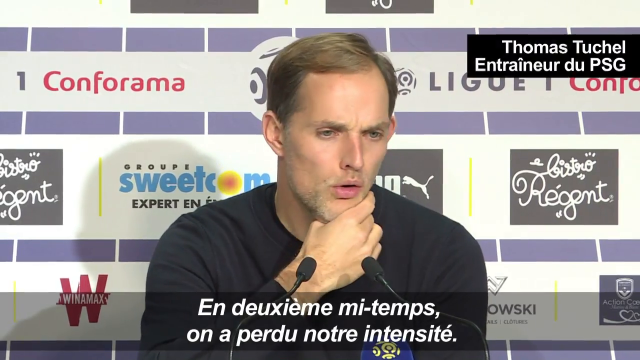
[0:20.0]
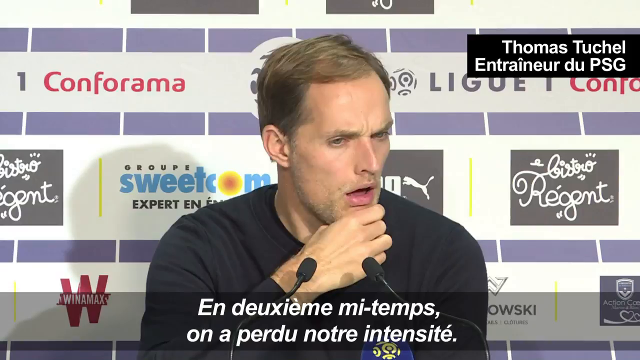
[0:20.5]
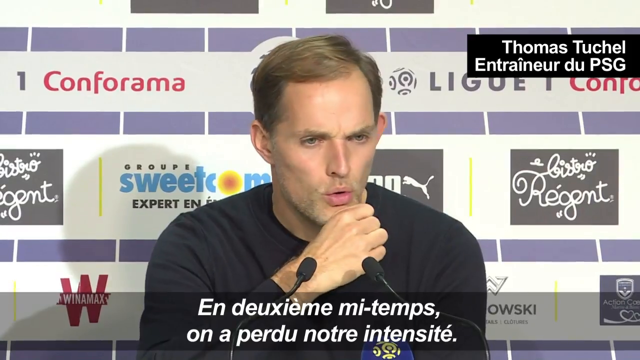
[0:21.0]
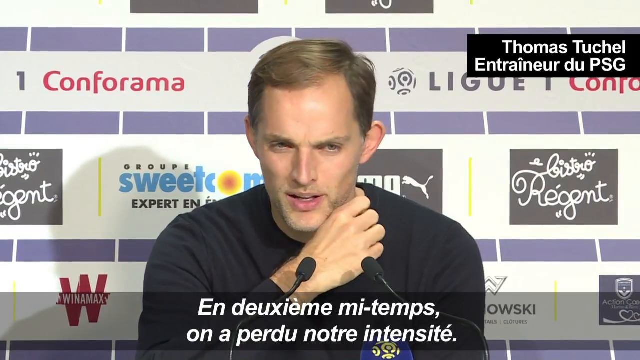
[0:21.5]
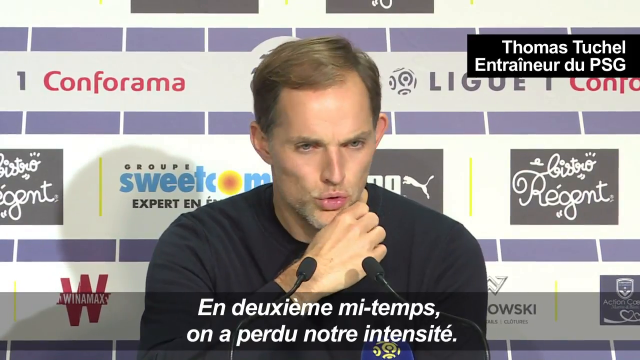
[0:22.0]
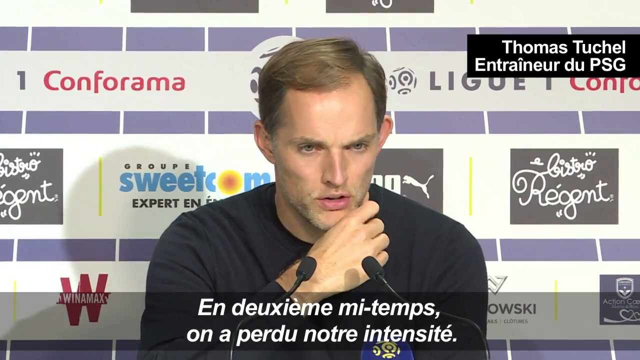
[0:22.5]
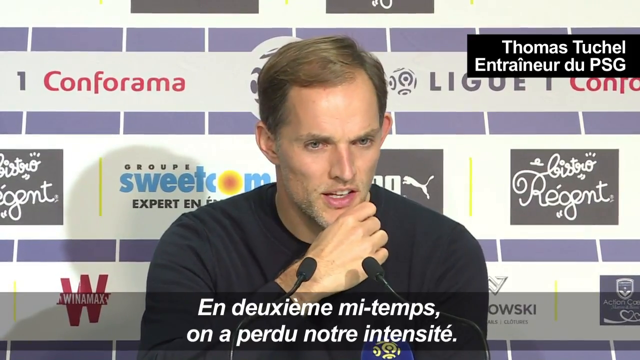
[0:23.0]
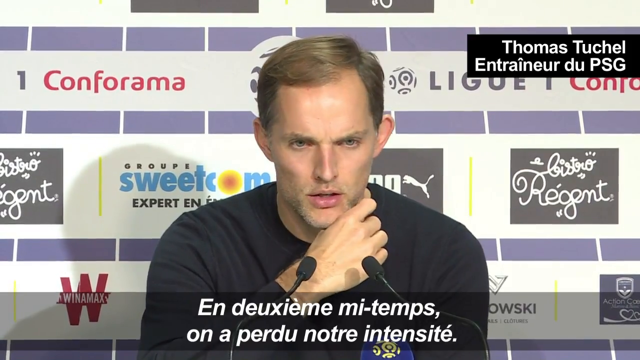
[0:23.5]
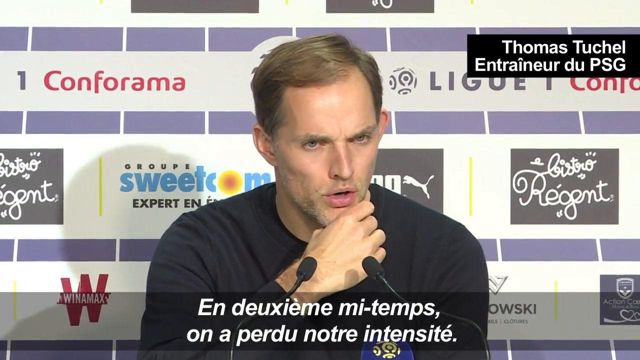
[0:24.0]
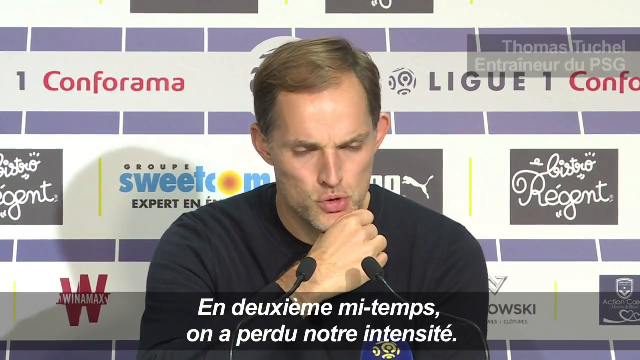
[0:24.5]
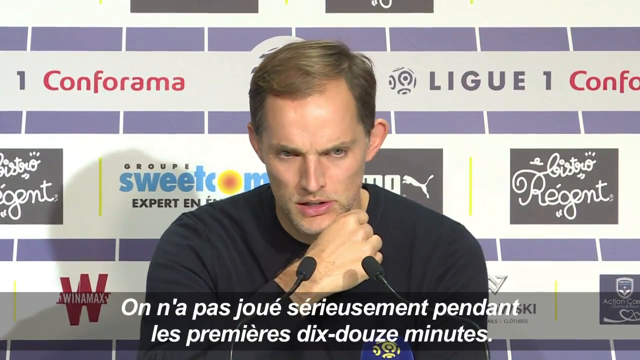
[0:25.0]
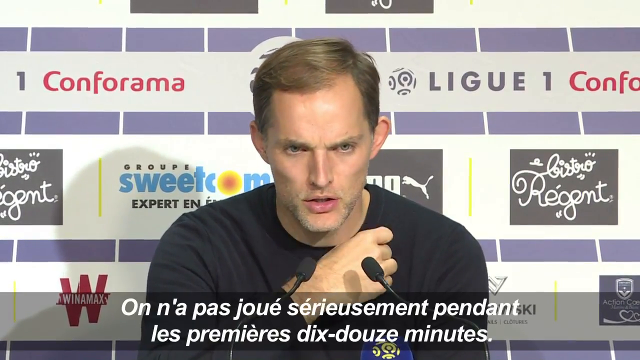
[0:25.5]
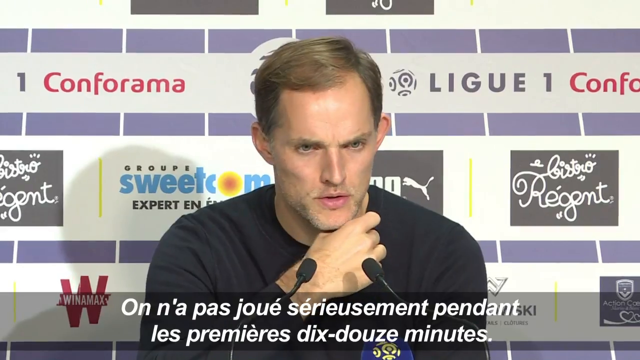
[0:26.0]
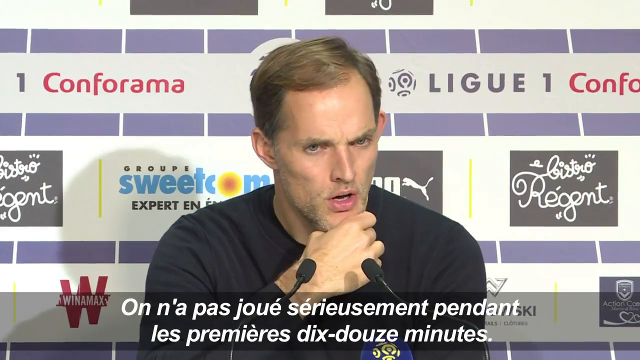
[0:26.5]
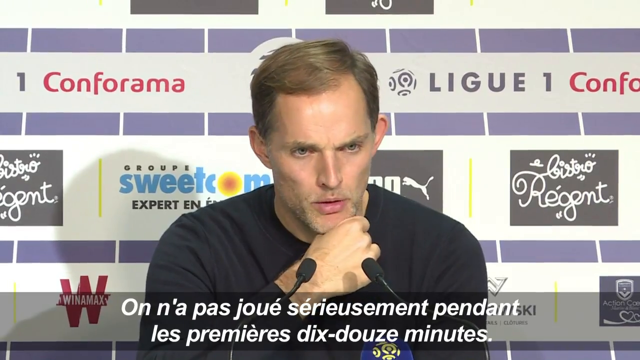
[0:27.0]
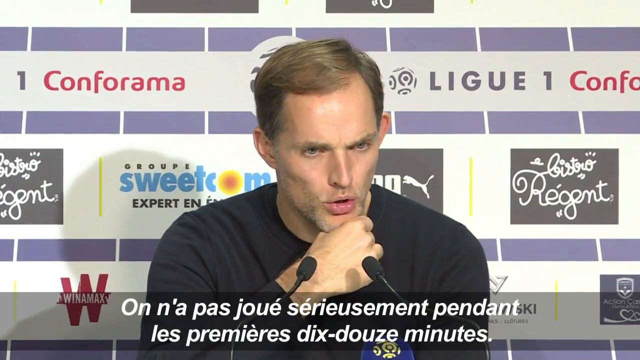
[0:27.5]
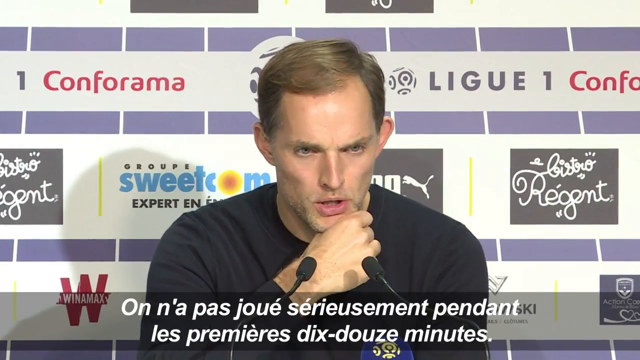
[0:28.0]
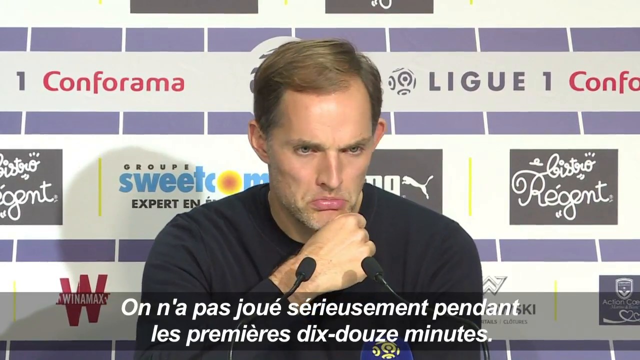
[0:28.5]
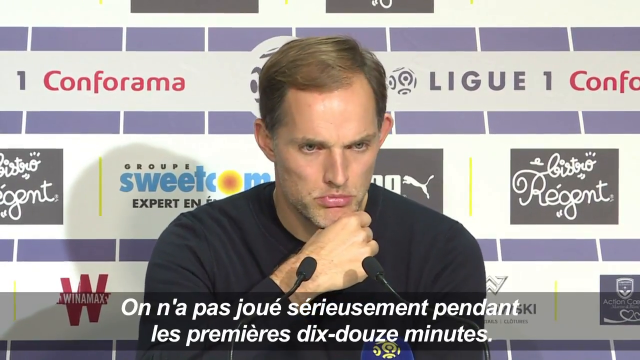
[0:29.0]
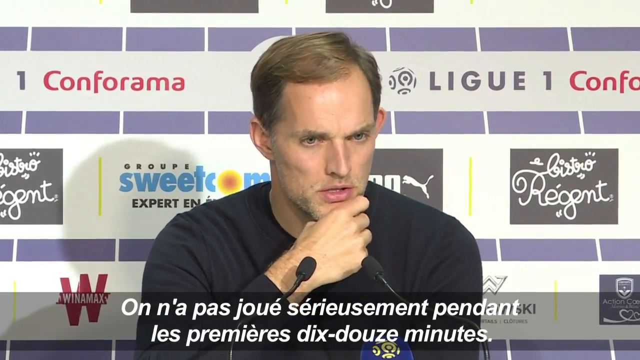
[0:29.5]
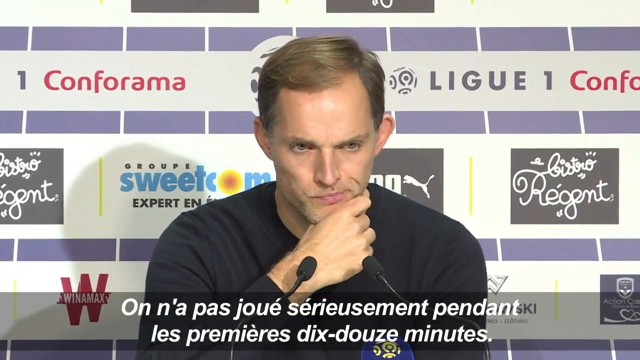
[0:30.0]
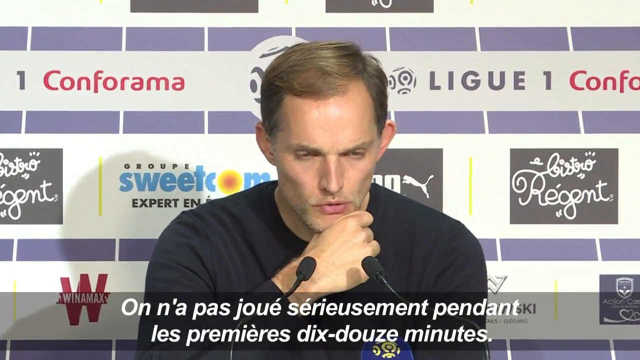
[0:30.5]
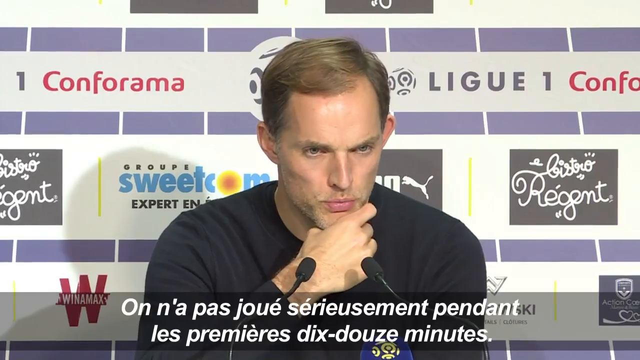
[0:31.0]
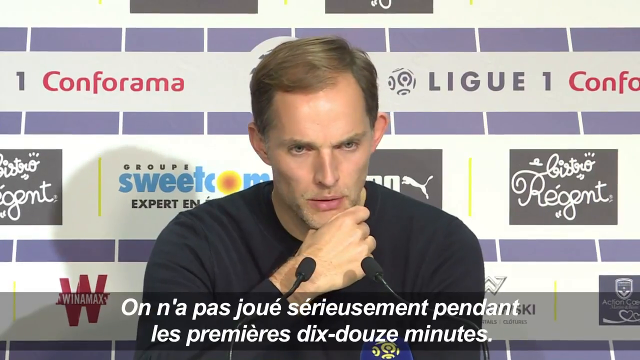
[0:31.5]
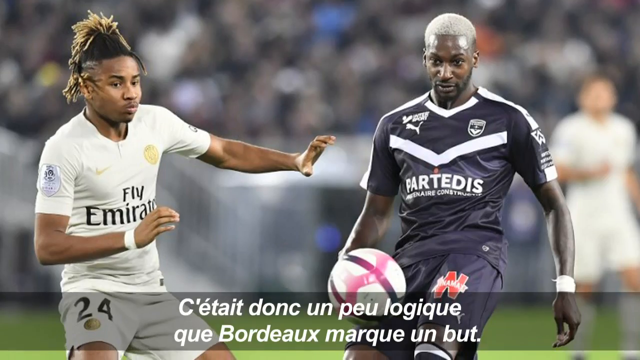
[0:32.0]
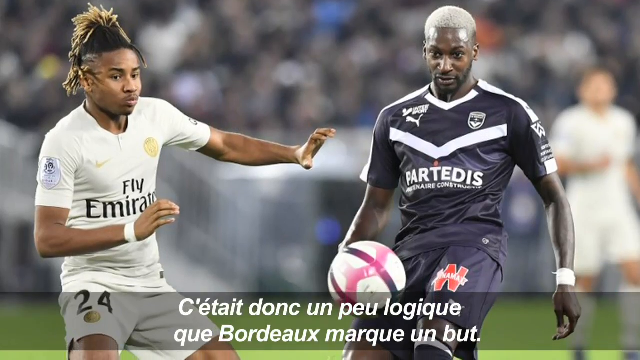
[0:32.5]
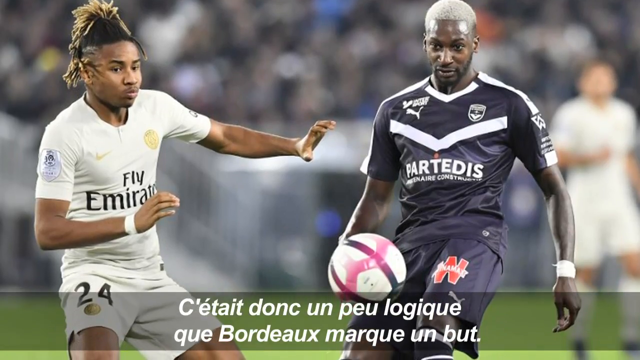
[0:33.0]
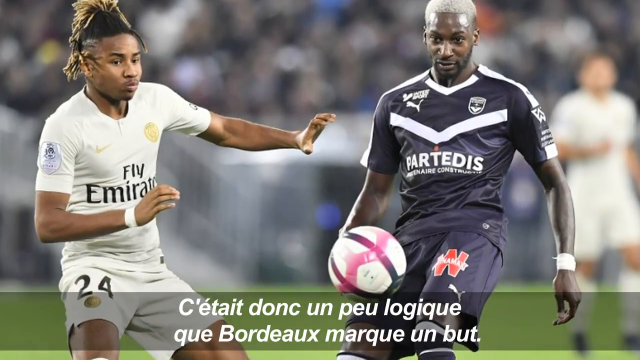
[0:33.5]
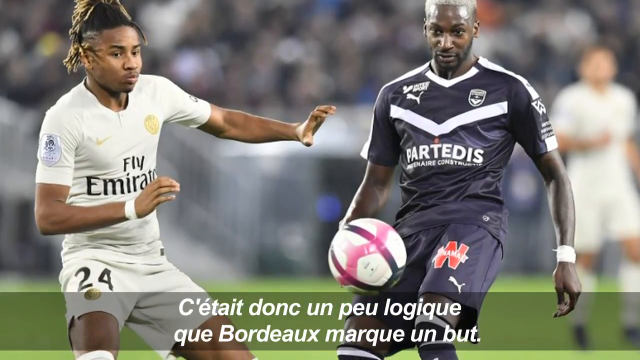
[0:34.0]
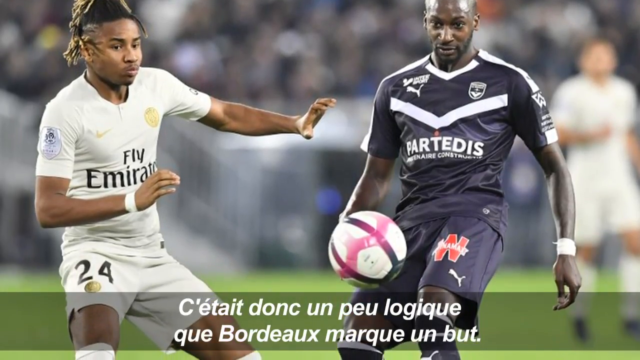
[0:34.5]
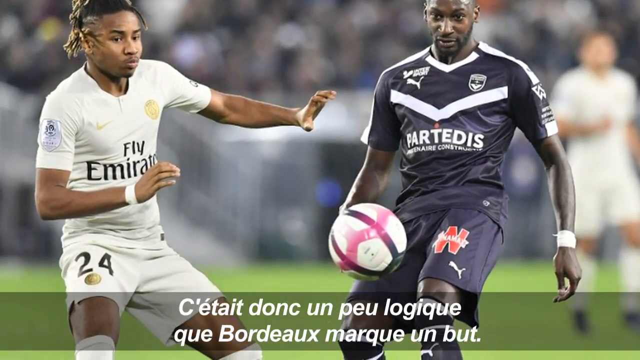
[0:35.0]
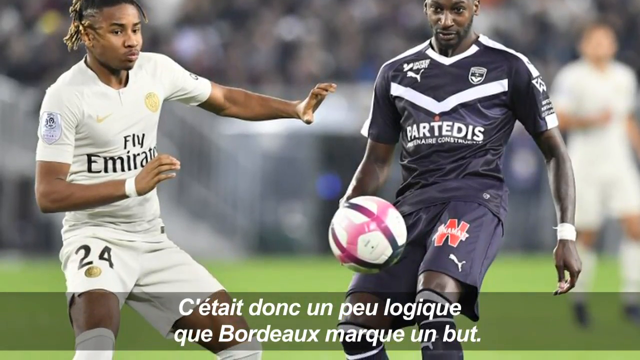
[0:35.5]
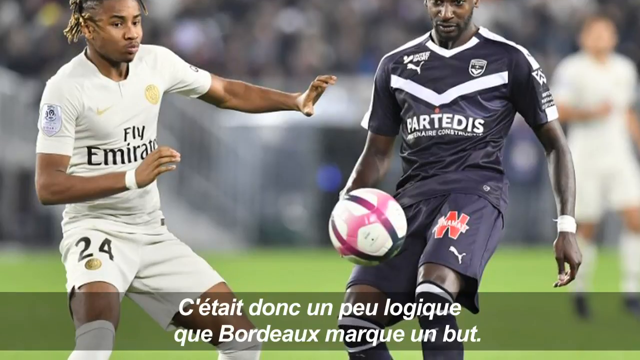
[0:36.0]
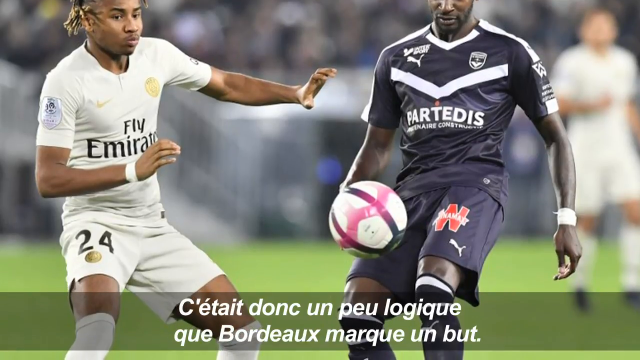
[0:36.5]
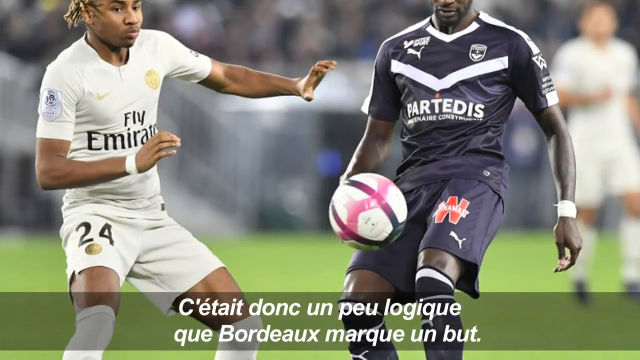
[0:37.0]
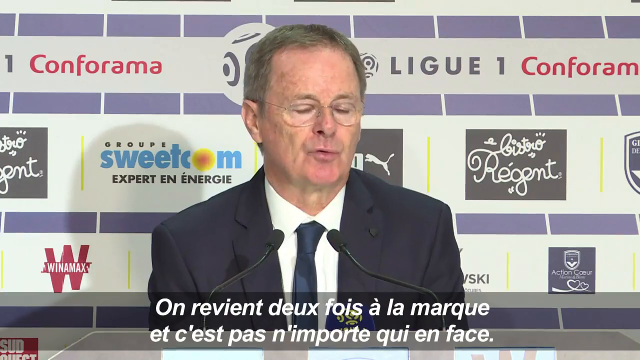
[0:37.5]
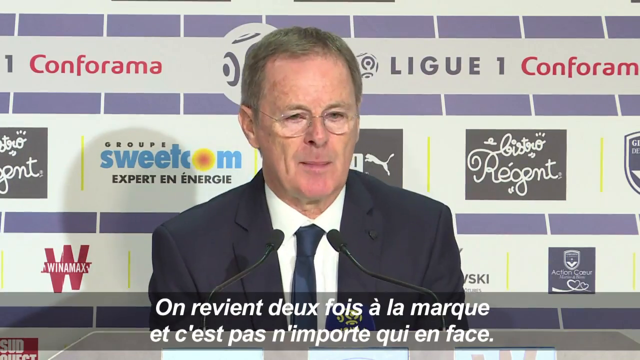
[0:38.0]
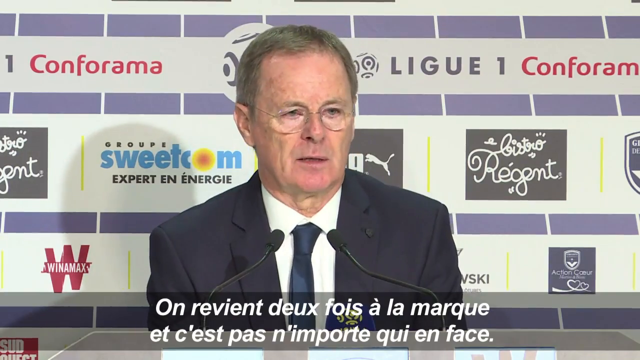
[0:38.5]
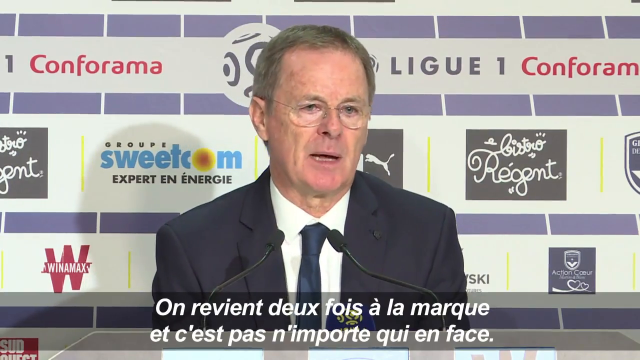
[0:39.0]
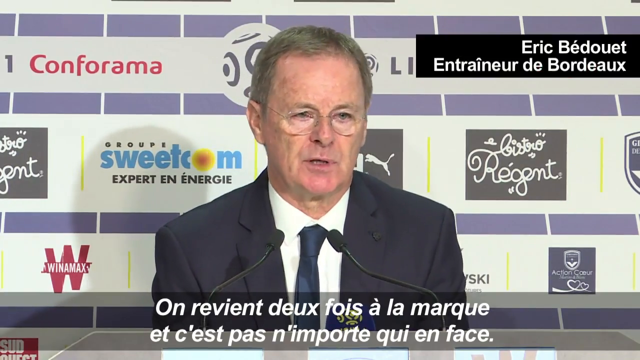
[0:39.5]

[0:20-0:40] The coach appears with the microphones, a middle-aged white man talking, and he looks quite serious. The video cuts to more action shots of the two teams playing, then to a press conference with a different coach, the opposing coach, talking. The footage is mostly these press conference clips, along with pictures or action shots of players during the game. The pictures are probably from key moments in the game, possibly around the time a goal was scored. The shot ends with the opposing team's coach being introduced at his own press conference.